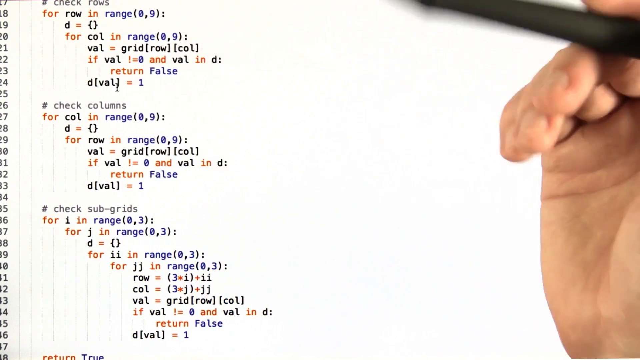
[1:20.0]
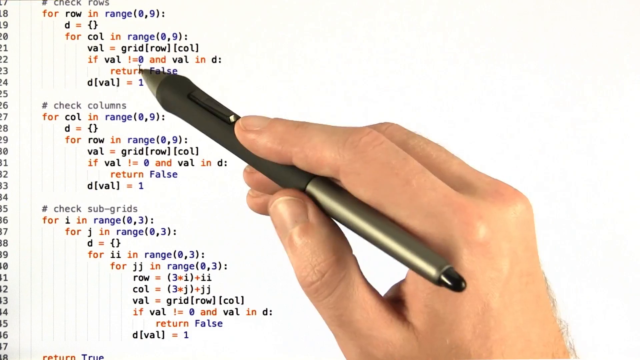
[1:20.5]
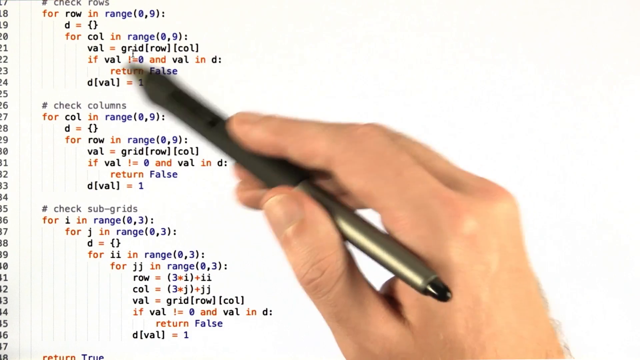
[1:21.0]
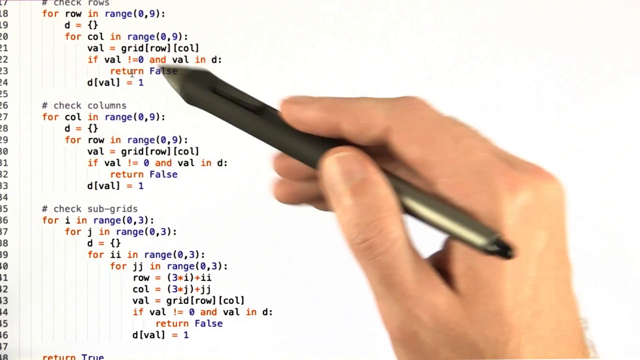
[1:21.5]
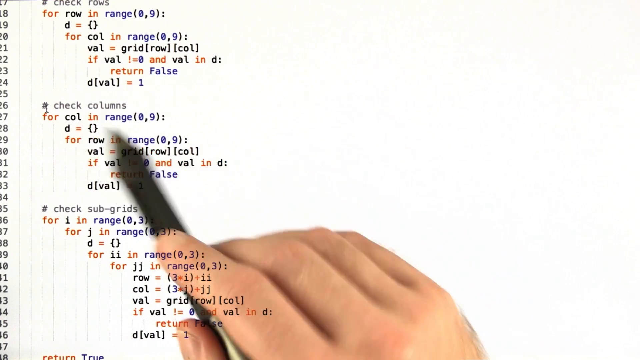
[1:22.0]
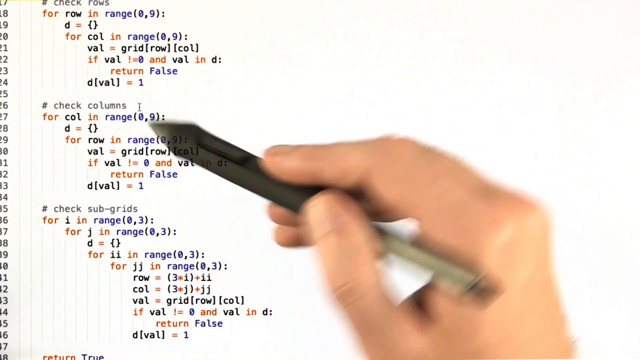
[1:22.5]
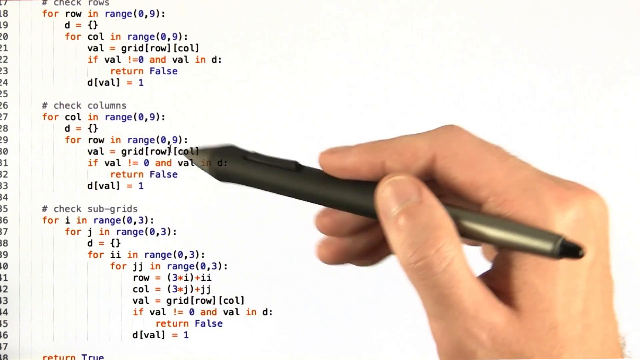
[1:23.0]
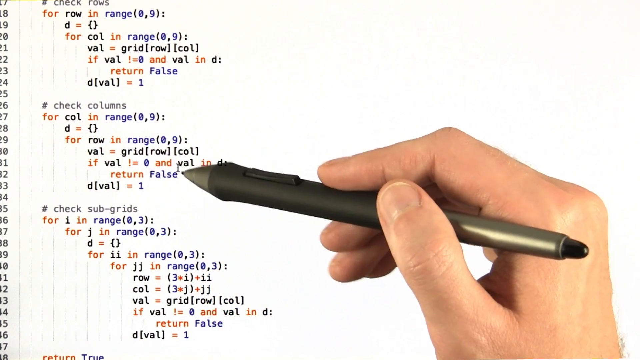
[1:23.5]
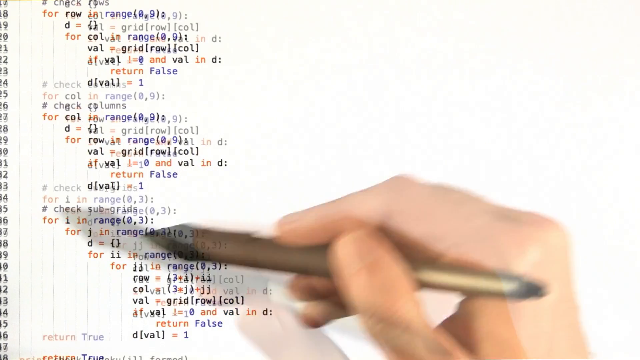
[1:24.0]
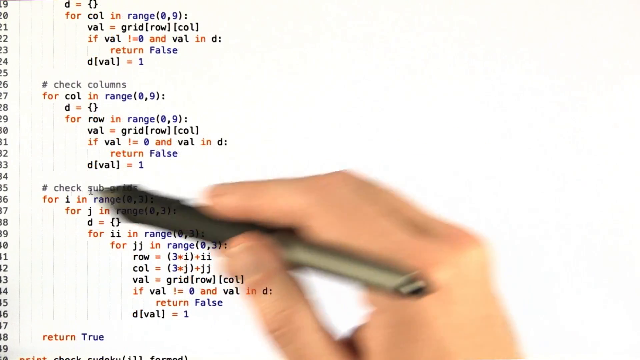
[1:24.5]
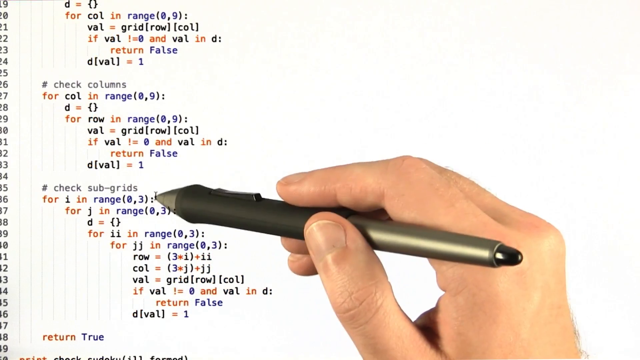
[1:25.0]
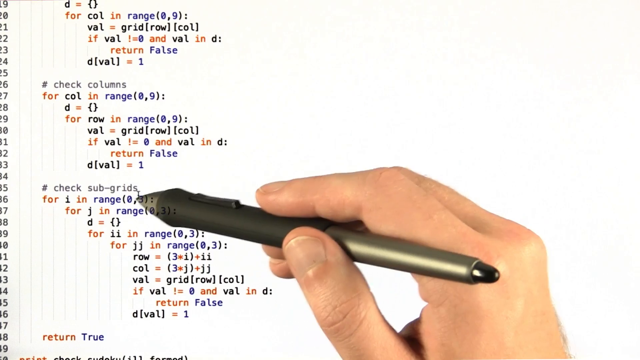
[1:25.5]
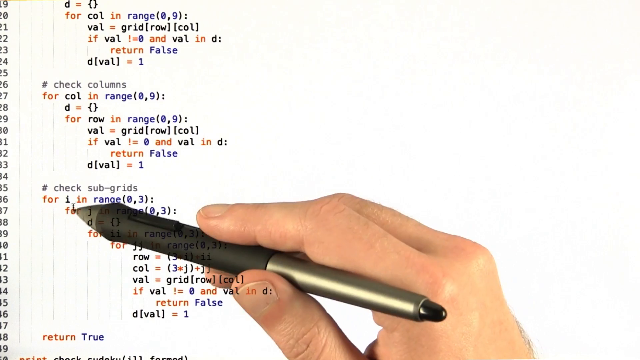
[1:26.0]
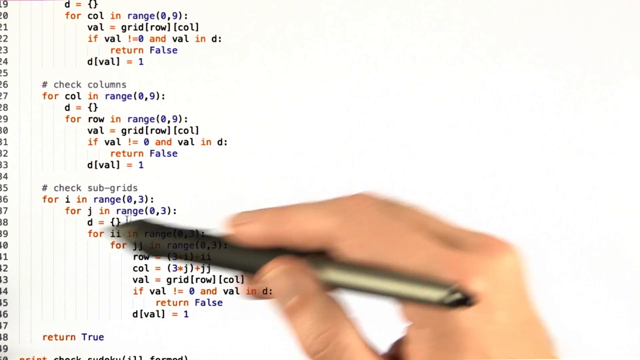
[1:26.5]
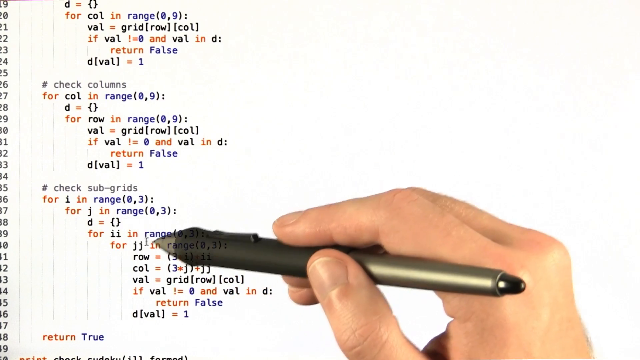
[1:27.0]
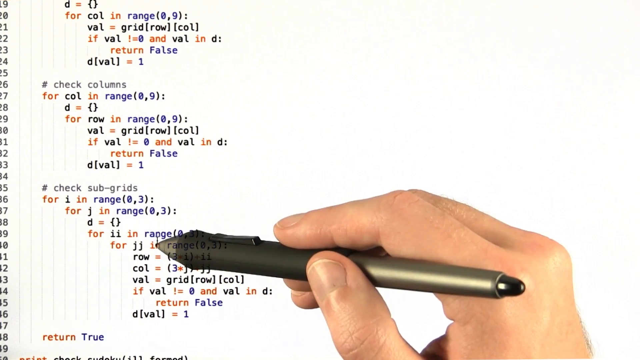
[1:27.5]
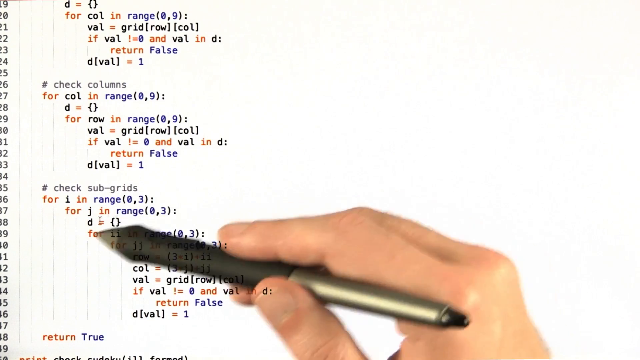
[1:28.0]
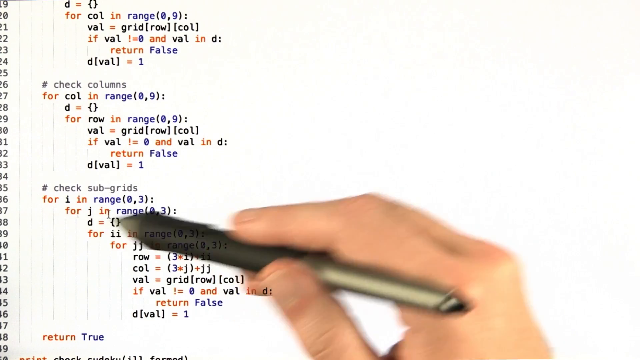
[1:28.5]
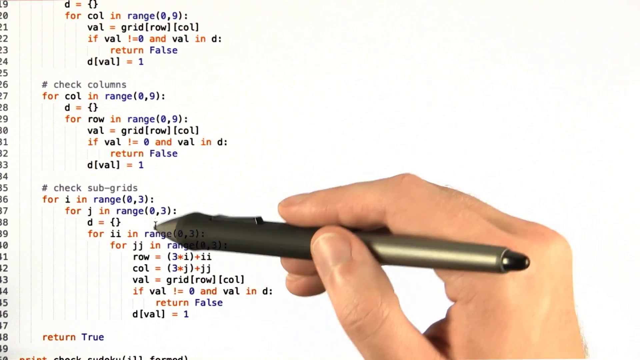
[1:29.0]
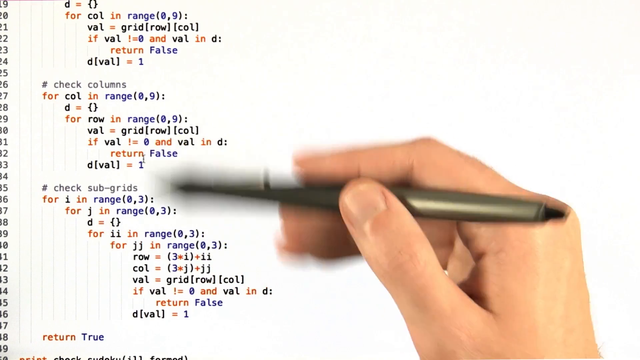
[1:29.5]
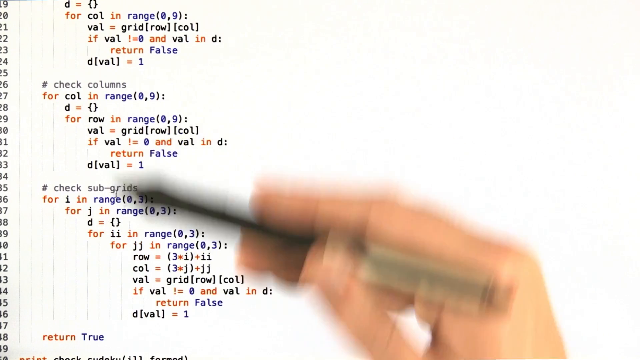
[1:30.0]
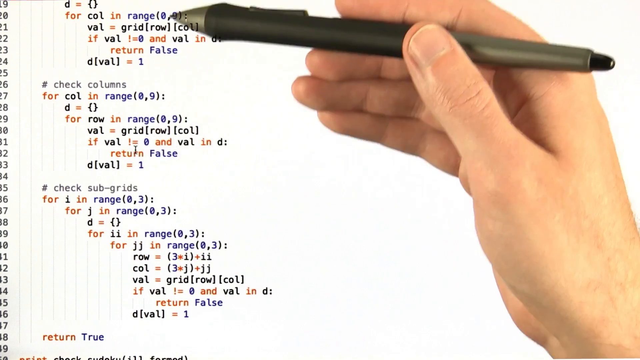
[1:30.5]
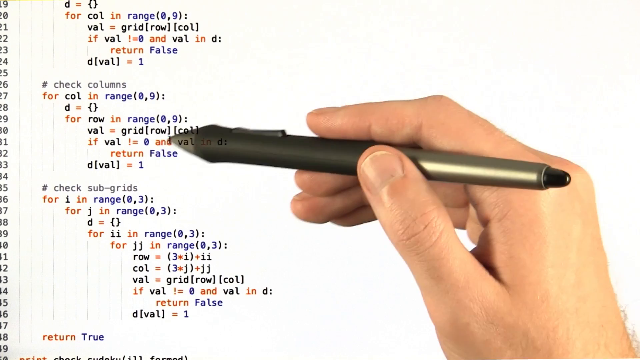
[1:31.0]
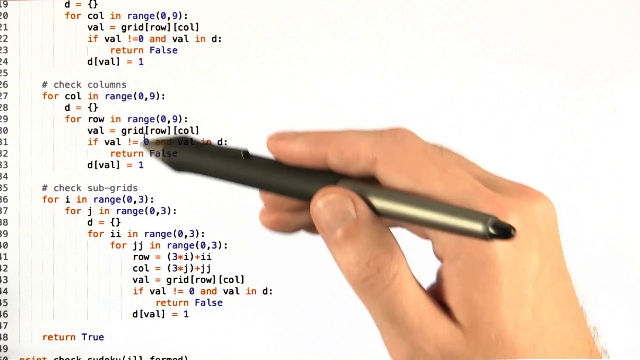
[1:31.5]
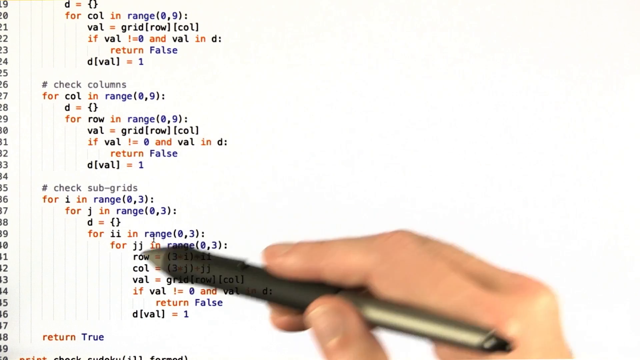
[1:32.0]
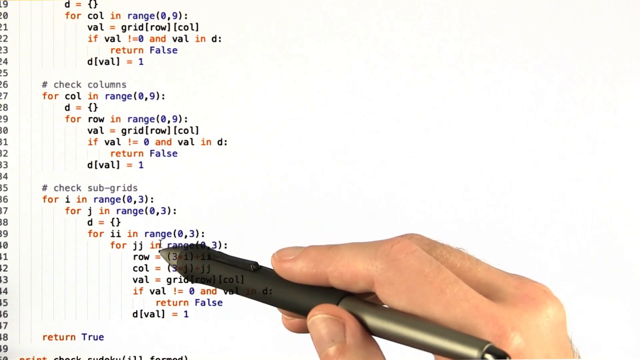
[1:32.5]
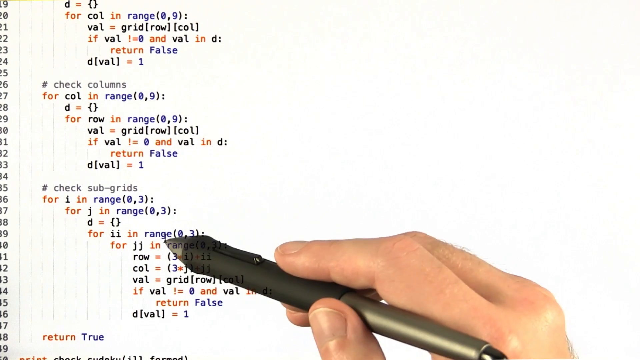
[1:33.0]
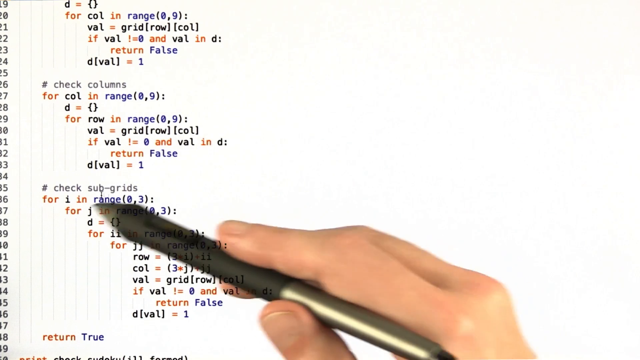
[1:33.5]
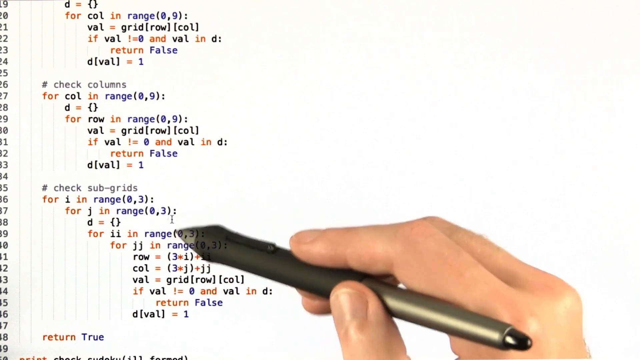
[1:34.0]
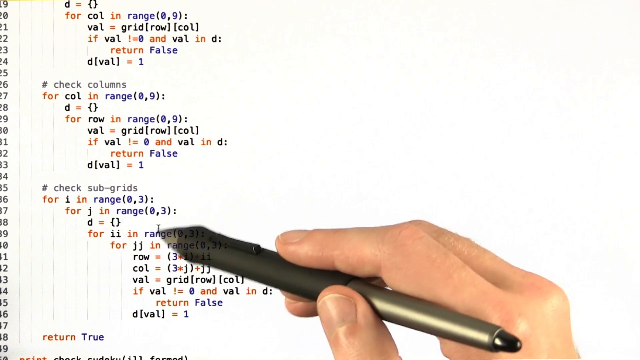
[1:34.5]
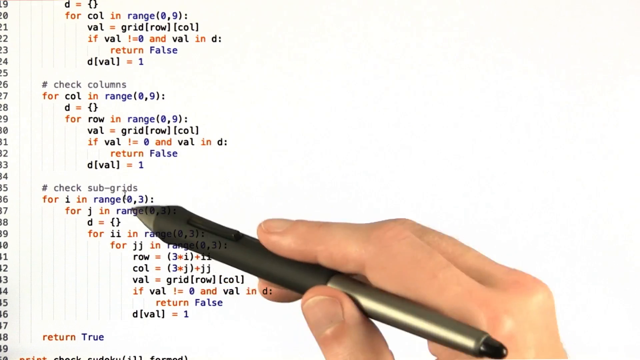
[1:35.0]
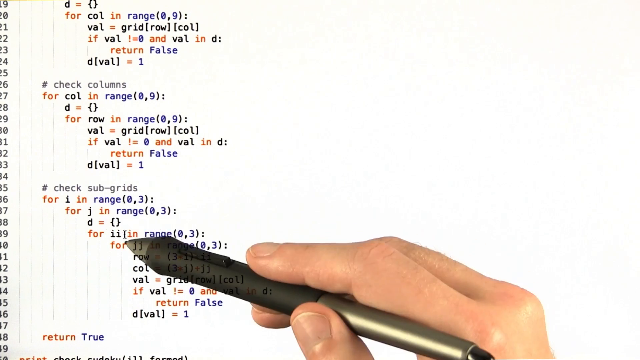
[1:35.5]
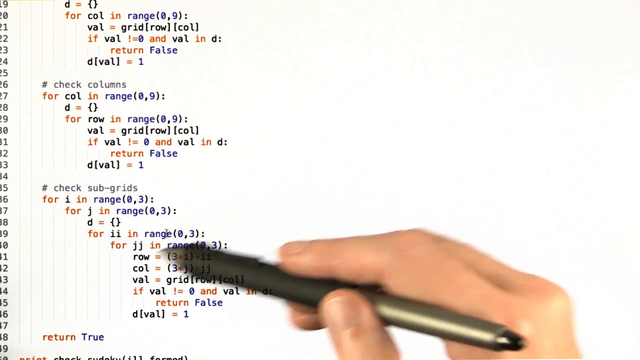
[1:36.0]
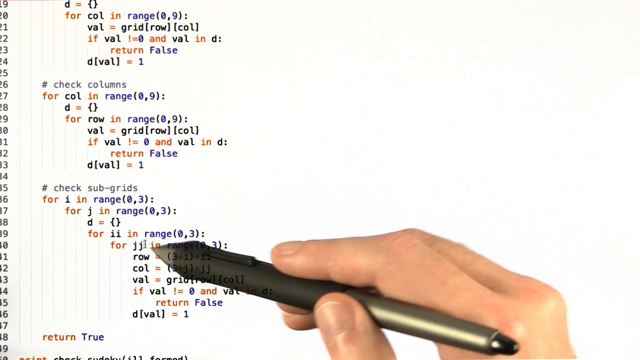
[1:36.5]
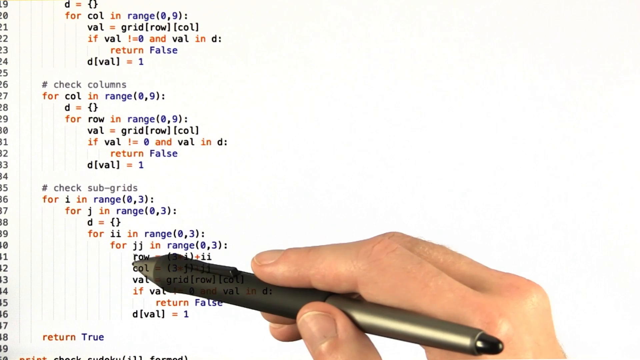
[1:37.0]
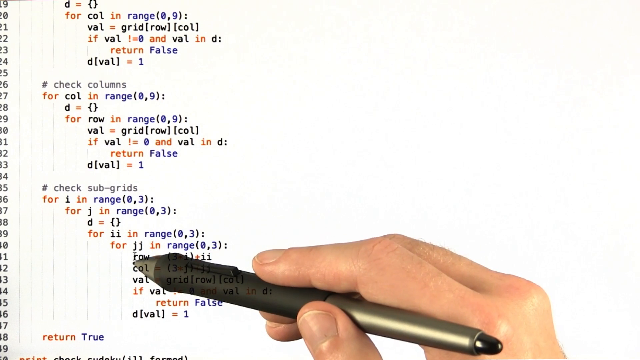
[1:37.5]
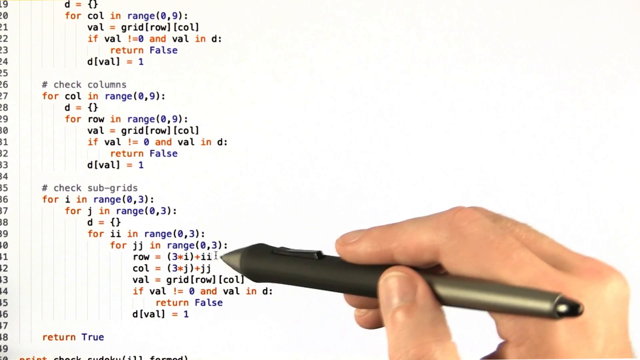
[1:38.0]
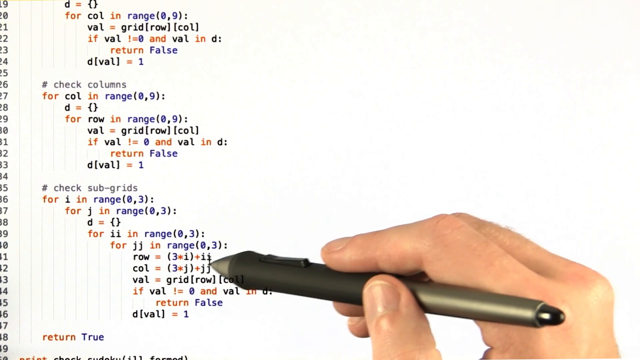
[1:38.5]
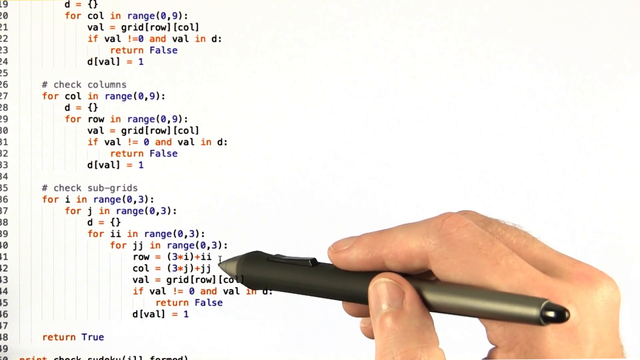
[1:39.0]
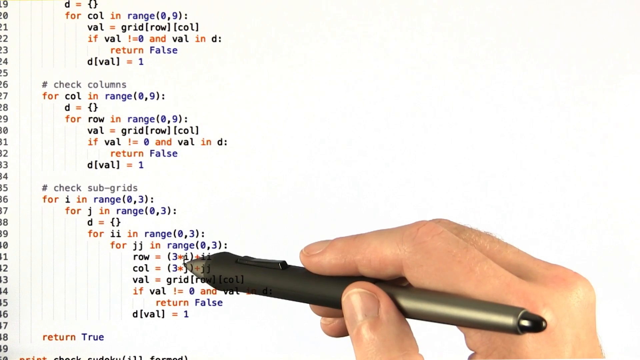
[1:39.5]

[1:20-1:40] The person continues holding the digital pen in the right hand, pointing out different lines of code. The pen is normal-sized; its tip looks gold, the next half is black, and the top half is a goldish color with a small black tip at the top. The screen has a white background with computer code running top to bottom in purple, orange and black, and row numbers on the left-hand side. At the top is a for statement, with indented lines underneath containing open and closed brackets and other programming characters.